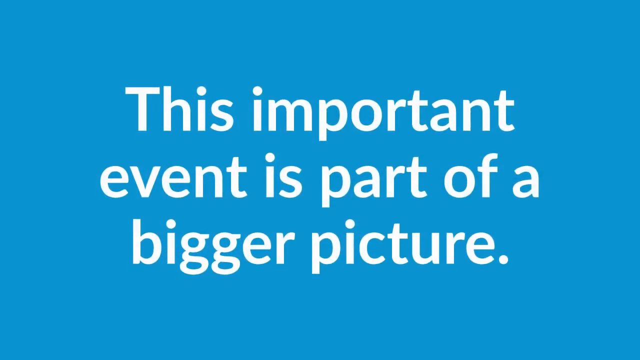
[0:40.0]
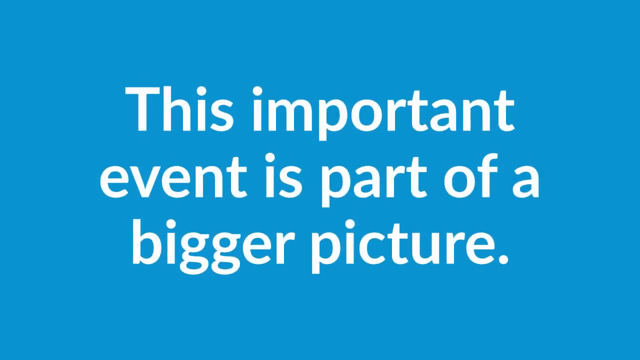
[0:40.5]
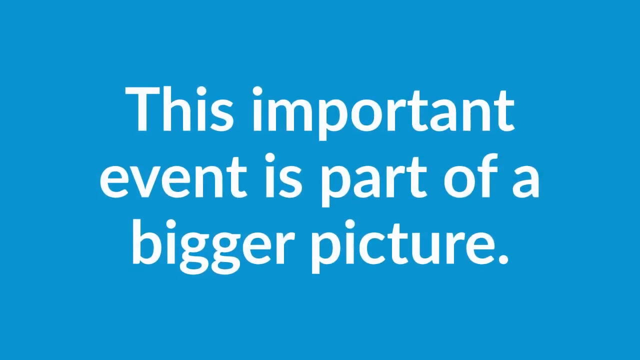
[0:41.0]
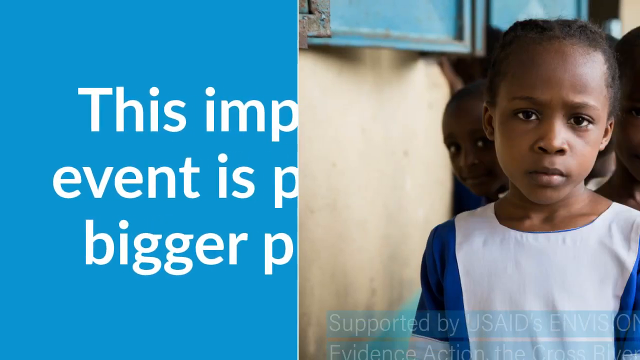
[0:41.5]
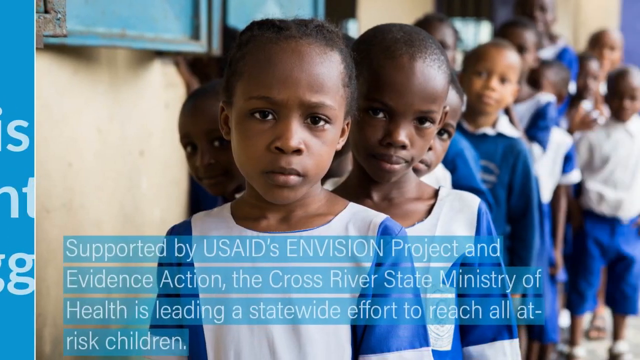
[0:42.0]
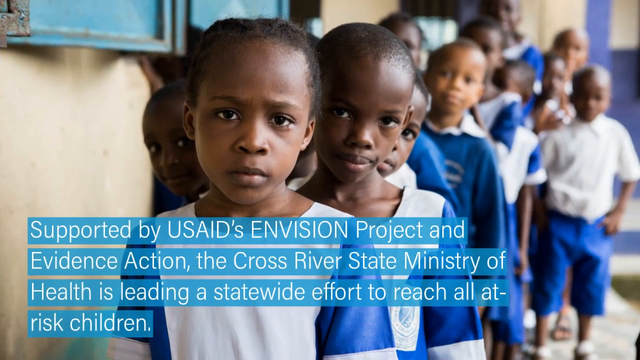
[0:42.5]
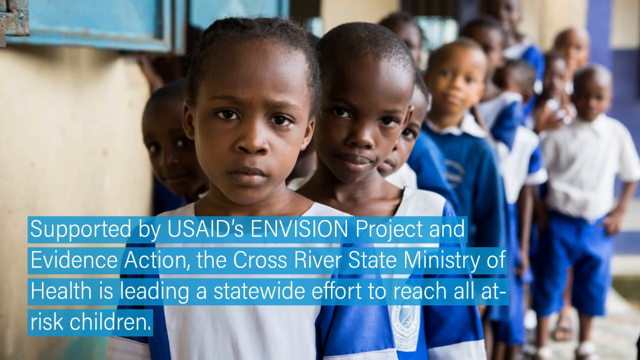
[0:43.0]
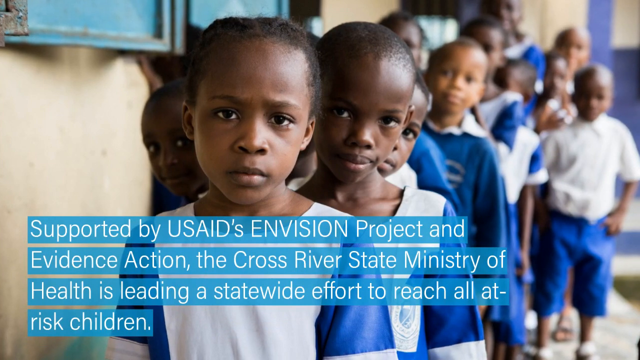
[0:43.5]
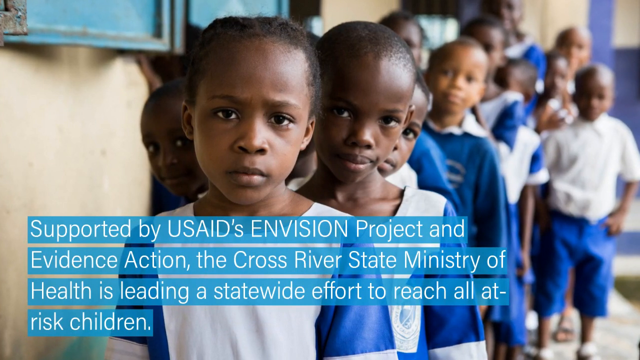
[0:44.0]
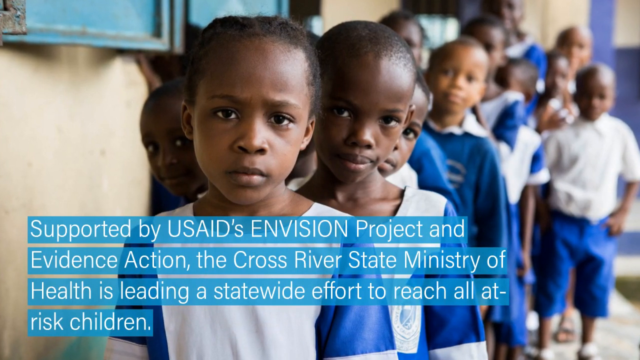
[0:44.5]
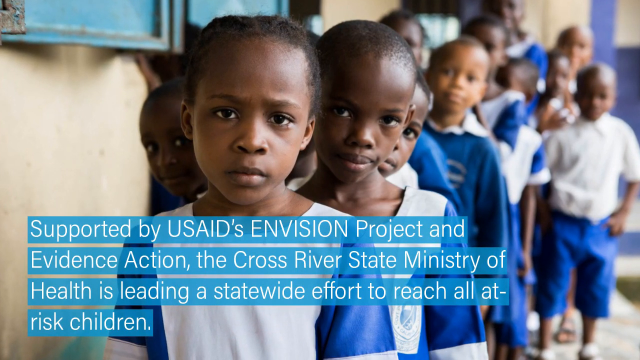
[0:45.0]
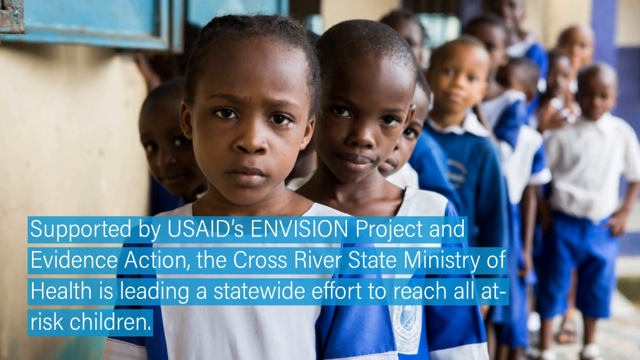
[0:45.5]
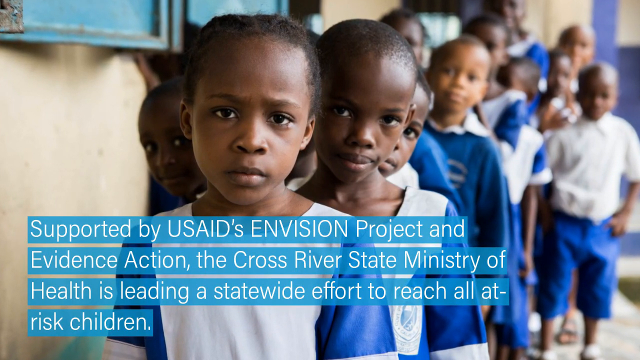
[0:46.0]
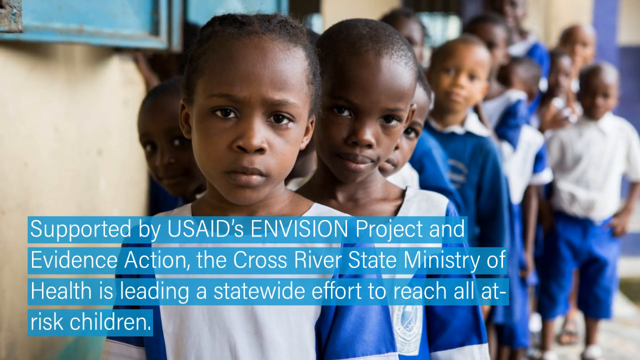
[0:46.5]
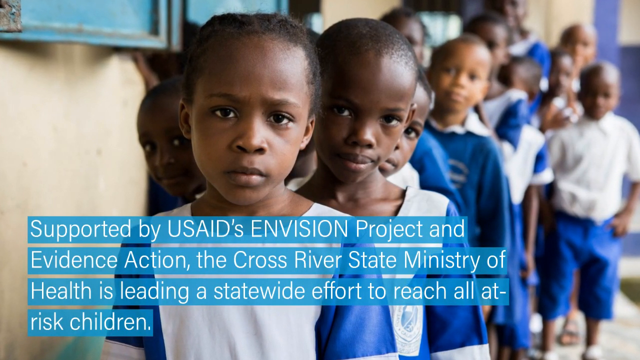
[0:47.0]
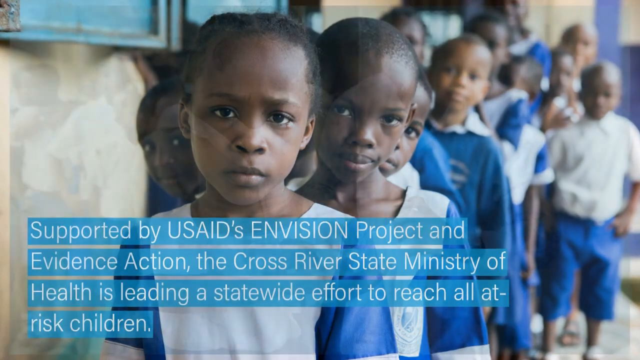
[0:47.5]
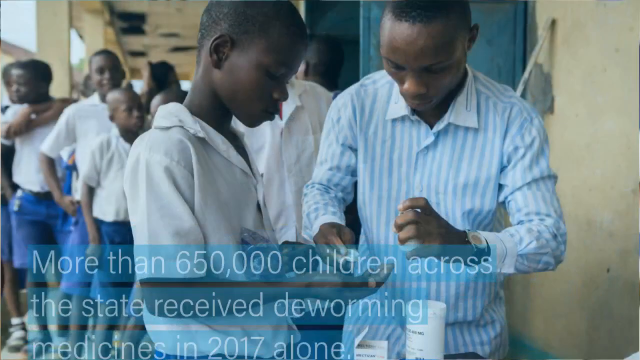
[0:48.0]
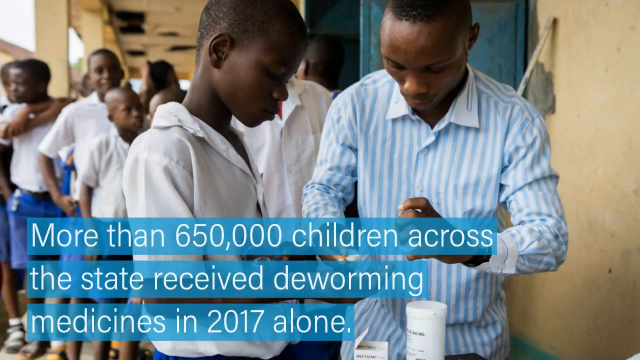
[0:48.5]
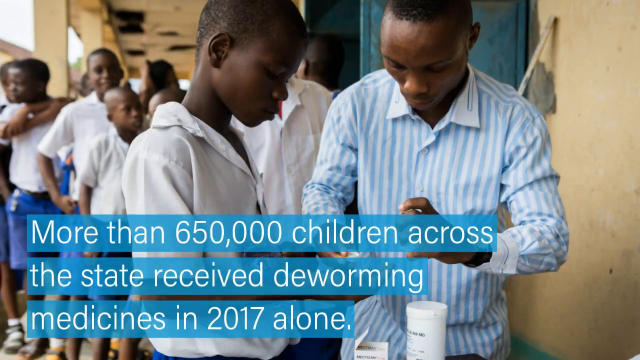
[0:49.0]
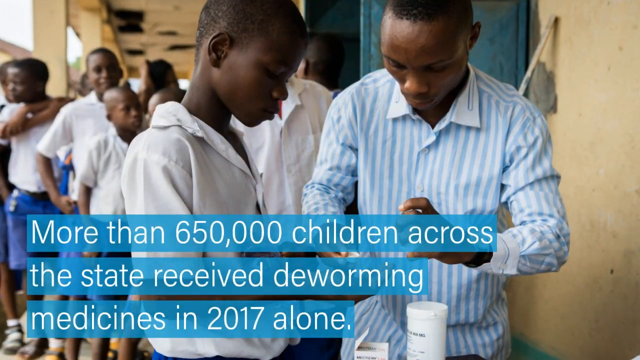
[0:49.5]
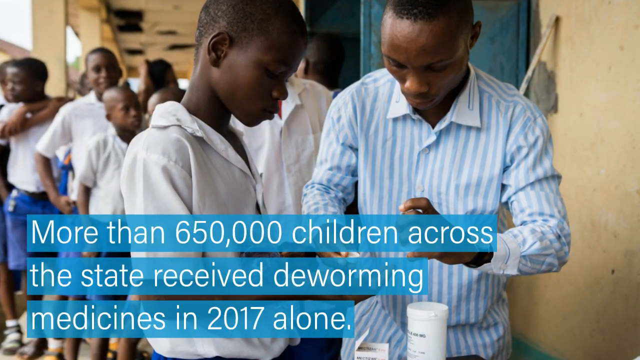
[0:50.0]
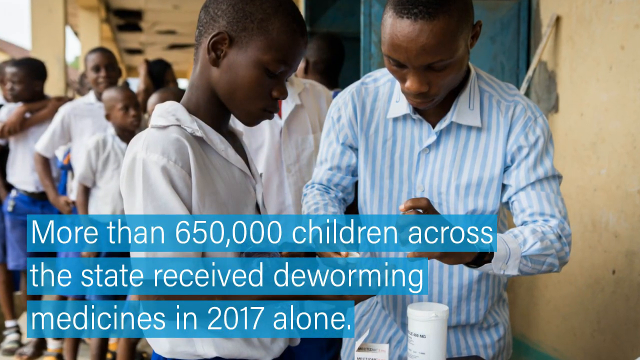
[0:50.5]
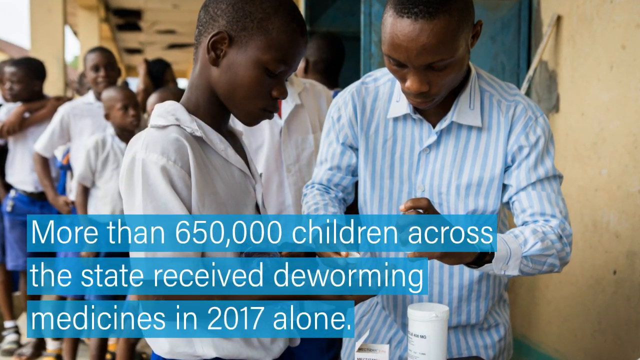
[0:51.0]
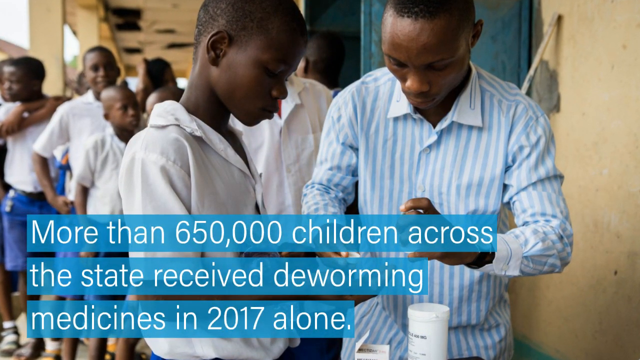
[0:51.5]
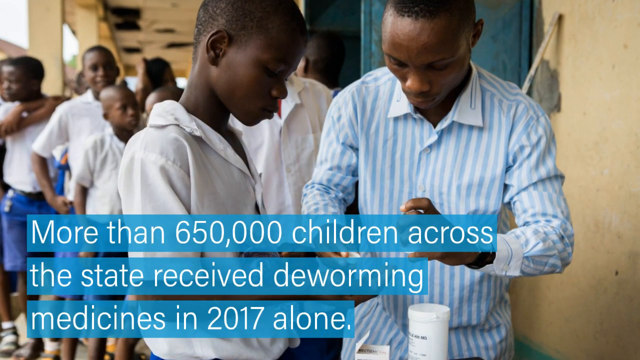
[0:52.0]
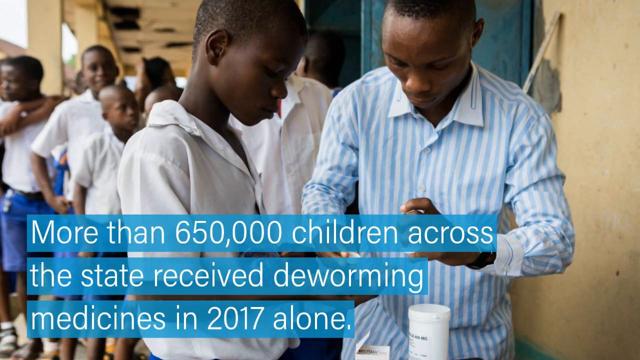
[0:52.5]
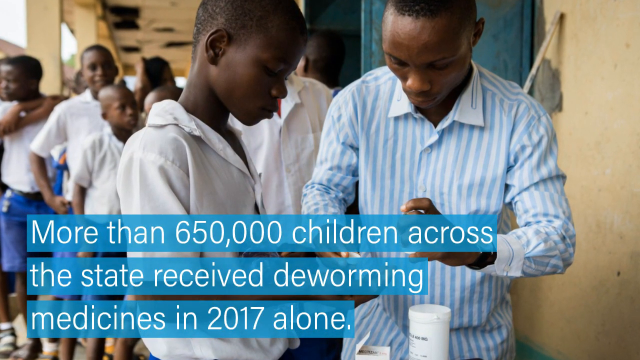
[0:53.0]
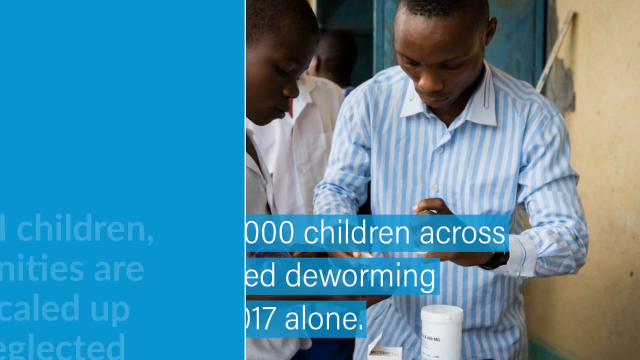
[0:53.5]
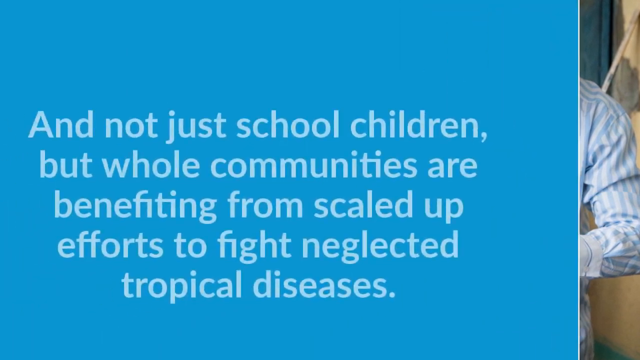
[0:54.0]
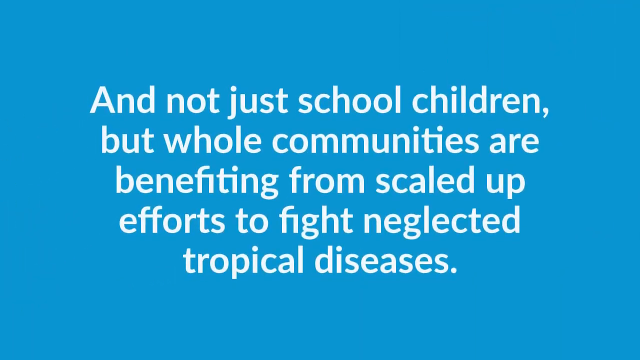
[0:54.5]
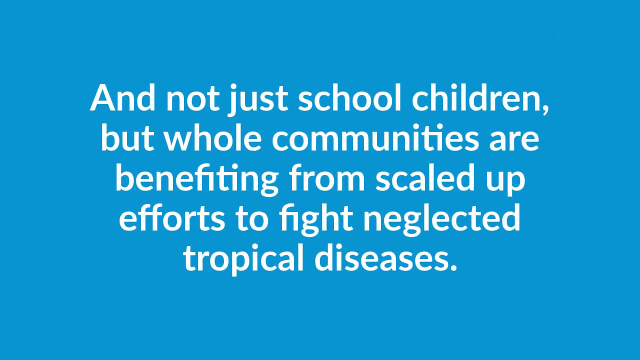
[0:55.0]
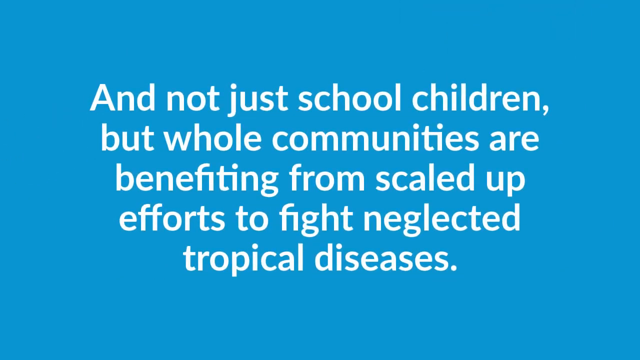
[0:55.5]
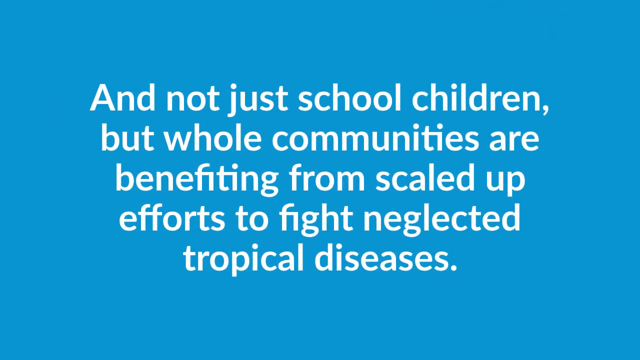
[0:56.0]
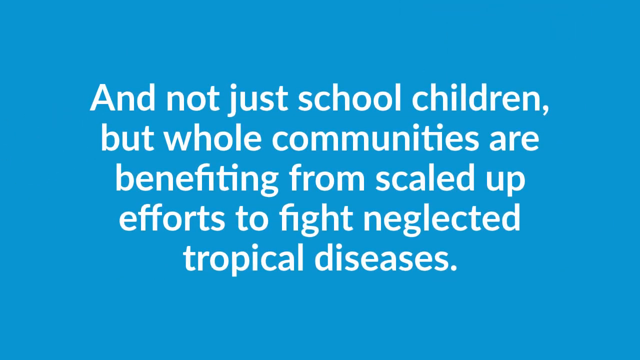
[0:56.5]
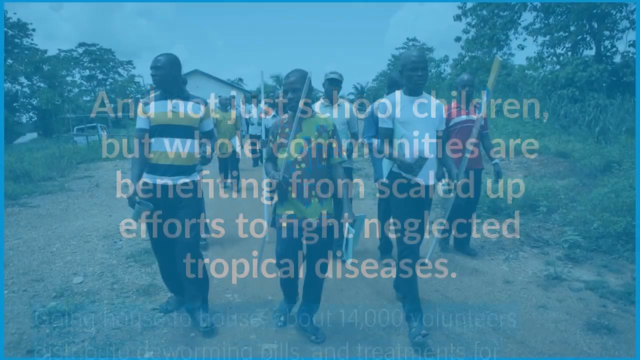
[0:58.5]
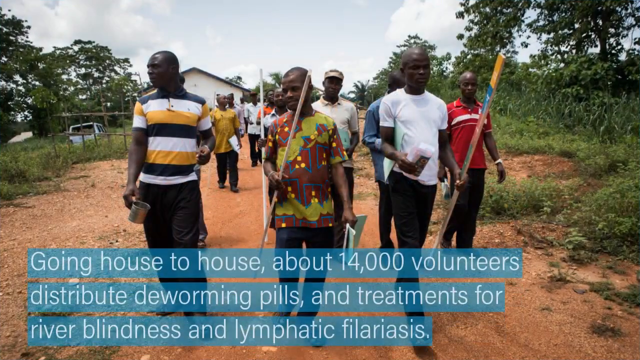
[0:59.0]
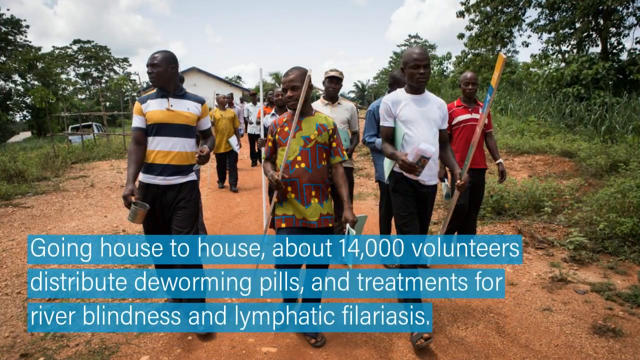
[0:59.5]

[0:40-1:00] A light blue screen shows three lines of white text: "This important event is part of a bigger picture." It holds for a second, and the next screen emerges from the left, as if someone is pulling a picture across to cover the screen. It is a still photo of younger children standing in line, maybe eight or ten years old. The one in front, a girl with short hair, looks at the camera and is seen from about the chest up; a bunch of other kids in line behind her become blurry in the background, all African kids. The text below says "Supported by USAID's EnVision project..." and continues for a few lines. The image fades to a new photo of more kids in line. The kid in front is turned with his right shoulder toward the camera and wears a white shirt. An adult in a striped light blue and white long-sleeve button-down shirt is in front of him, serving the kids somehow, though exactly what he is doing is unclear. The text below says "more than 650,000 children across the state received deworming medicines in 2017 alone". Next comes another light blue screen with five lines of white text: "And not just school children, but whole communities are benefiting from scaled up efforts to fight neglected tropical diseases." It then fades to another photograph, of people walking outdoors.